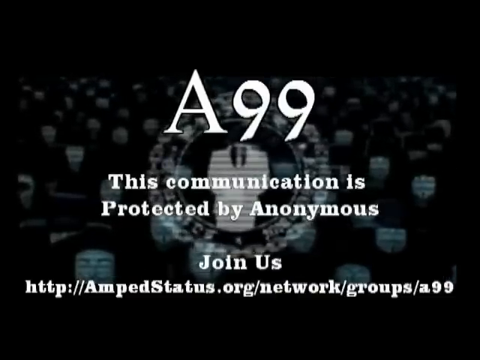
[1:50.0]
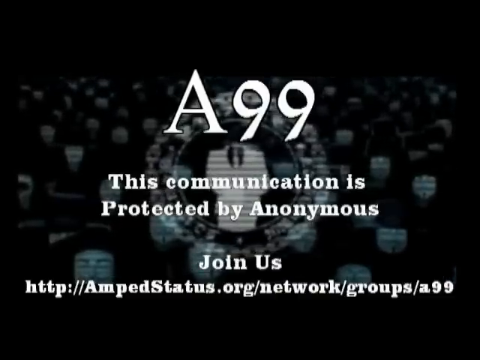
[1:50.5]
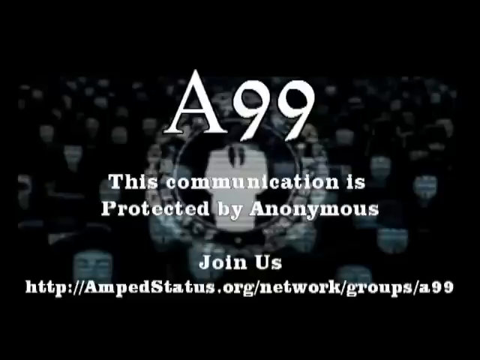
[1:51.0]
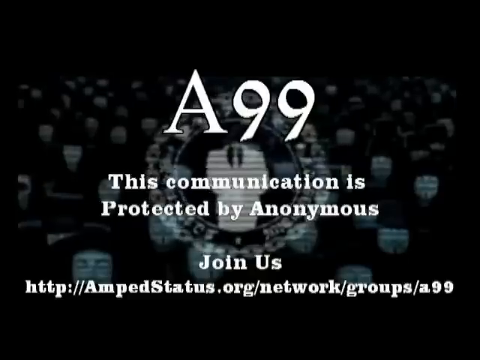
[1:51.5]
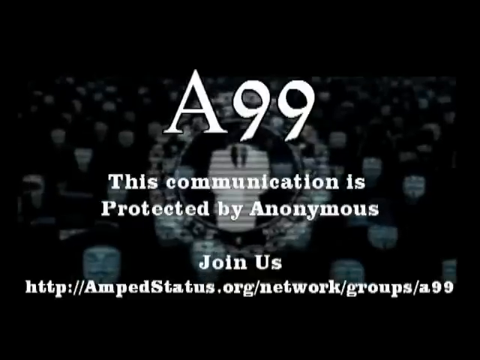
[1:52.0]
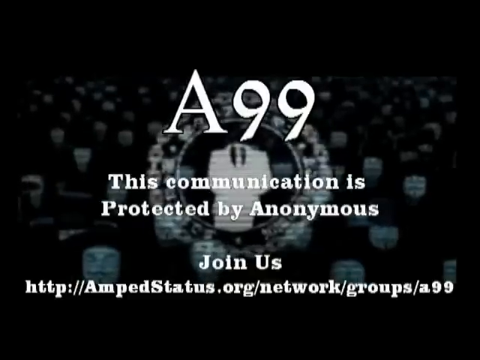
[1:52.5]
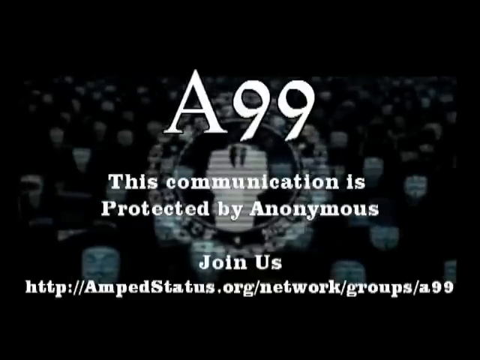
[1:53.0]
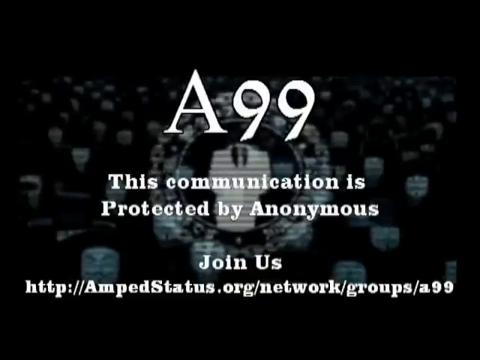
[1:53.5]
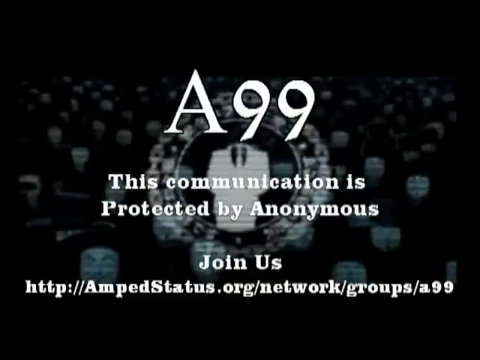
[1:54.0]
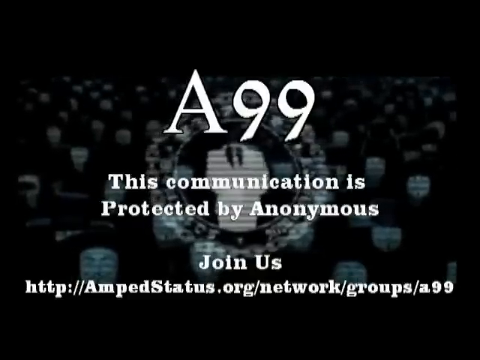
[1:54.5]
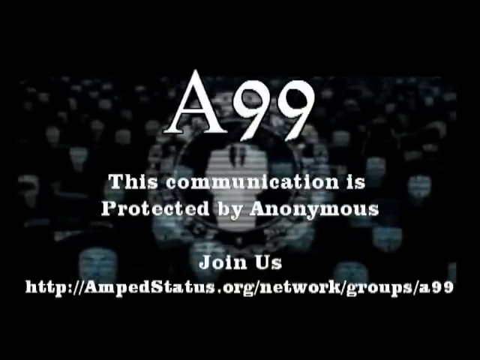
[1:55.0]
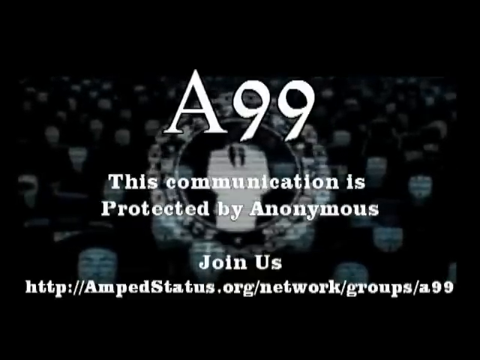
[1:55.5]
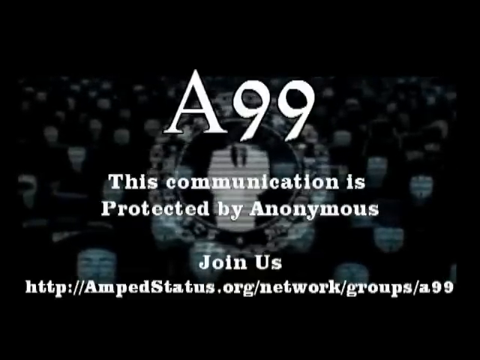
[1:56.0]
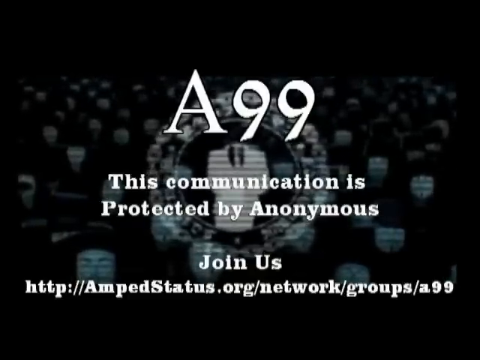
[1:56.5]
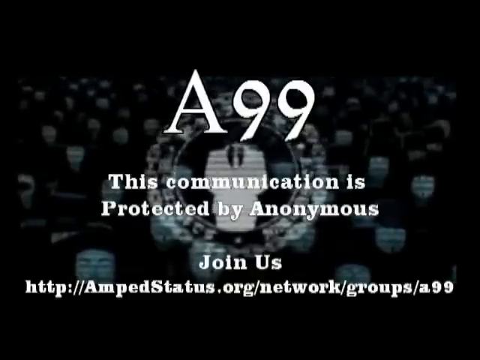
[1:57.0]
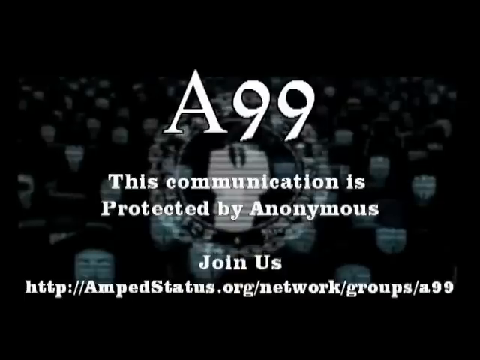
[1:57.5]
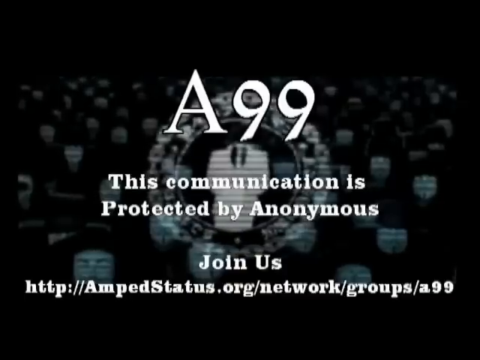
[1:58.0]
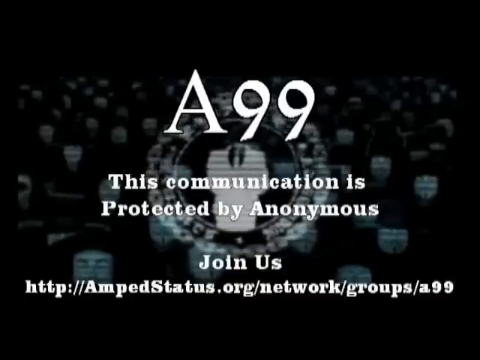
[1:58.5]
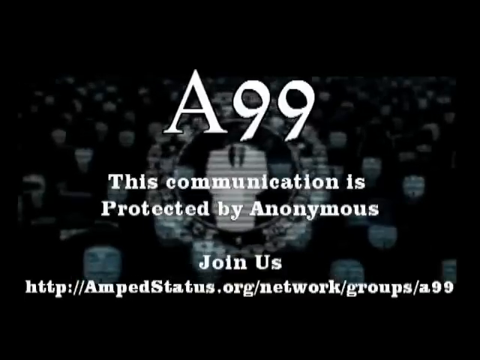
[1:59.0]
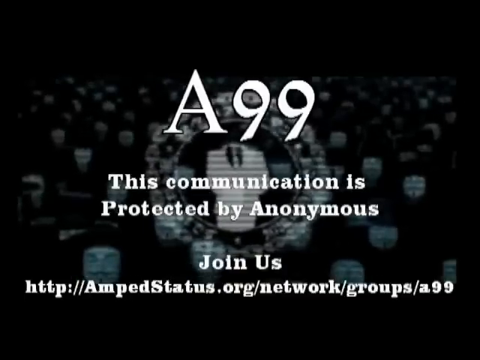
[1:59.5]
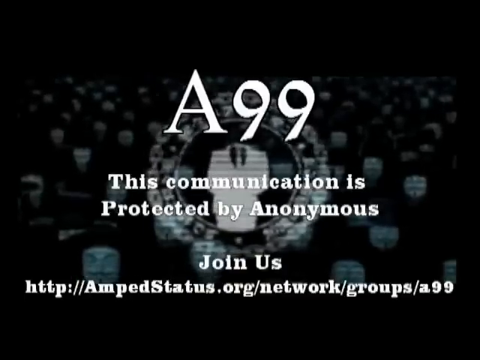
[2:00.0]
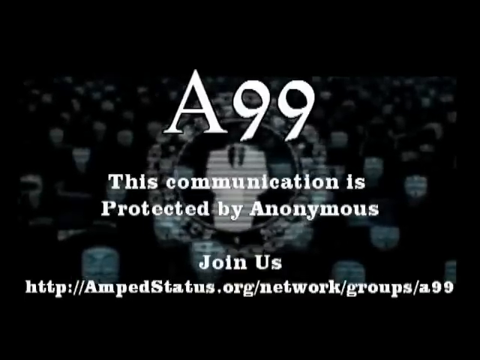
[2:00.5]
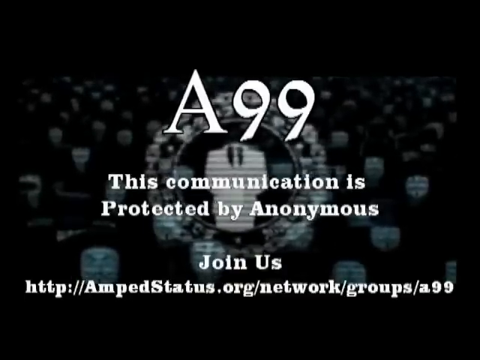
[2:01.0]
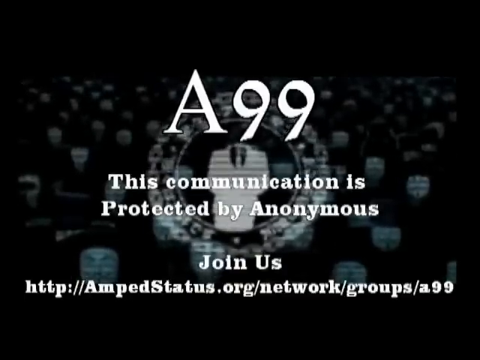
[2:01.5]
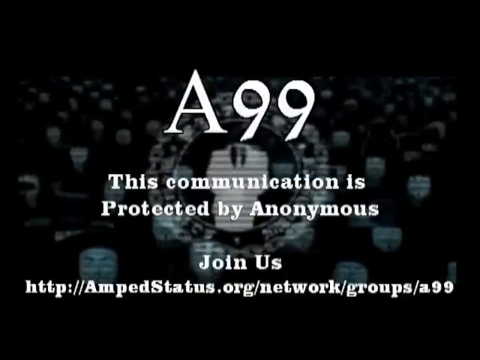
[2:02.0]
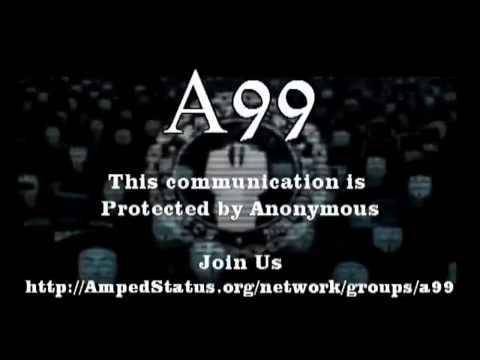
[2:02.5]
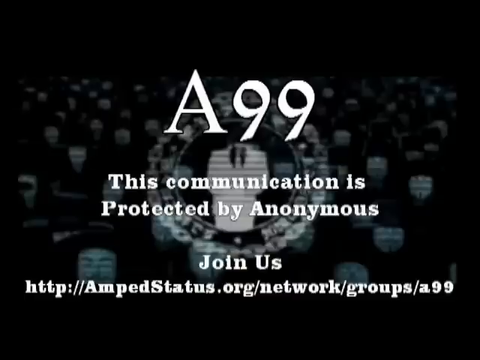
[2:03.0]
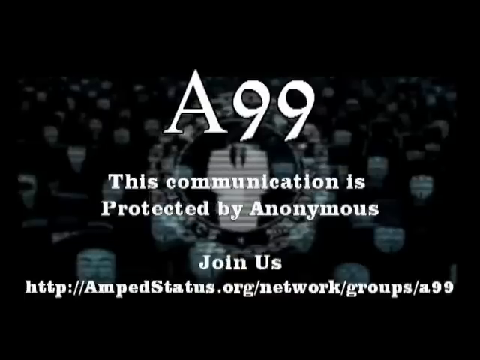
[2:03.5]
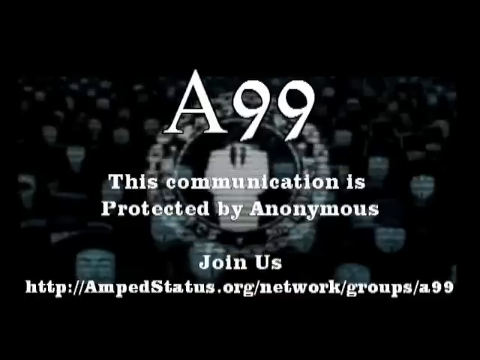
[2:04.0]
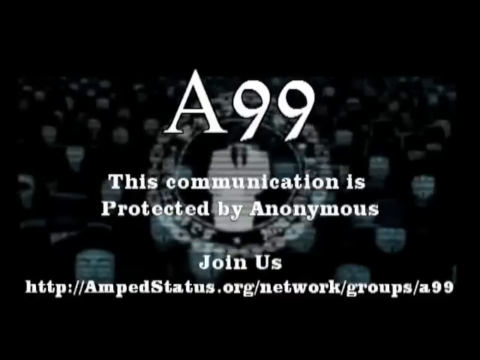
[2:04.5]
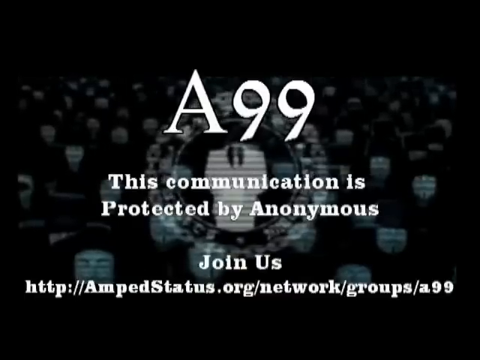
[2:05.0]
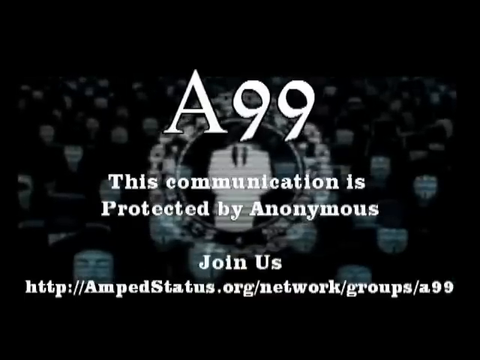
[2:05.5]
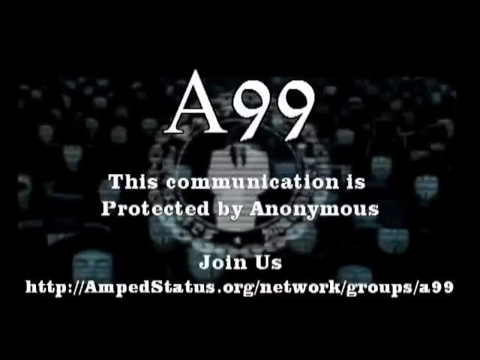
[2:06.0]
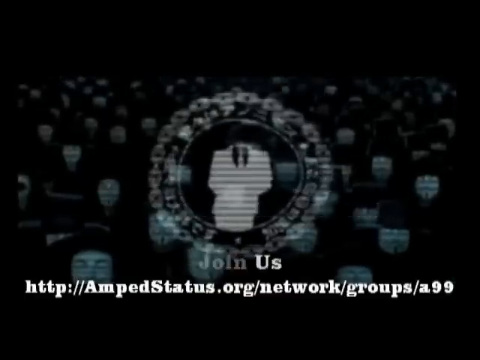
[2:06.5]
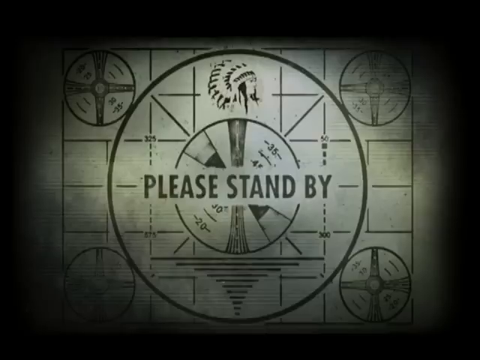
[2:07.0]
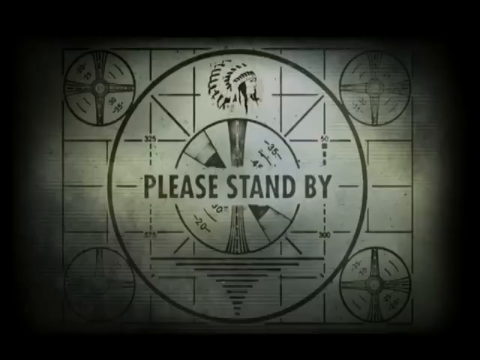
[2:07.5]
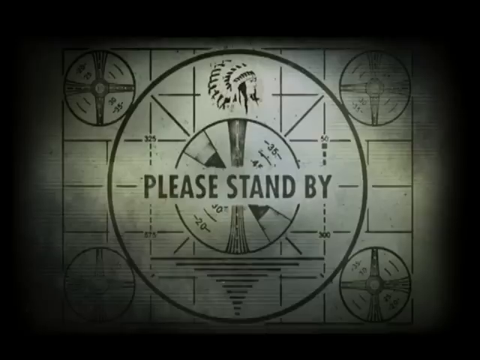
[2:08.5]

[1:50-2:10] A black background shows many figures wearing white masks and a circular logo with something inside it that looks like a person wearing a white suit. The logo appears to be slightly flashing, and because of it the video seems to be glitching. In front is white text: at the top of the screen a big caption "A99" in a different font than the rest, and below it text reading "This communication is protected by Anonymous". At the bottom of the screen is a website address labeled "Join us", starting with "ampedstation.org". At the end, the black background disappears and a kind of outro appears, with one big circle in the middle and four smaller circles, one in each of the corners. A drawing of a Native American man is in the upper part of the big circle, with the text "Please stand by" in its middle.